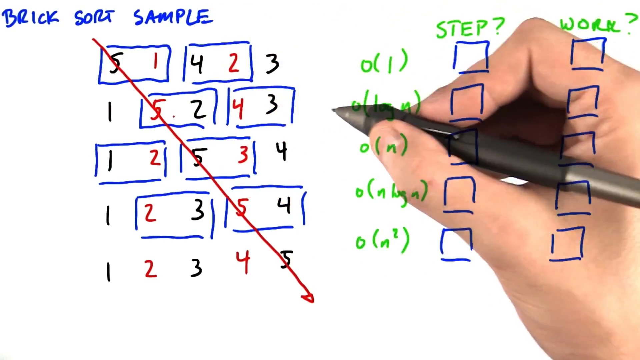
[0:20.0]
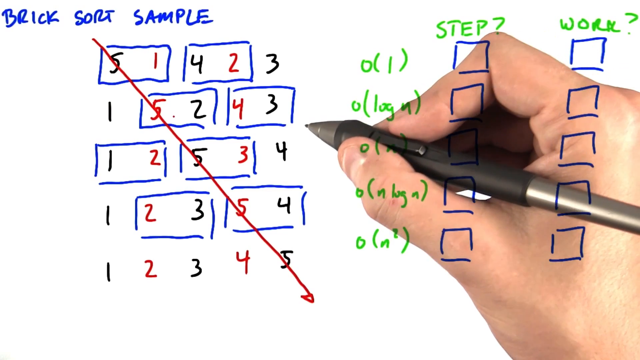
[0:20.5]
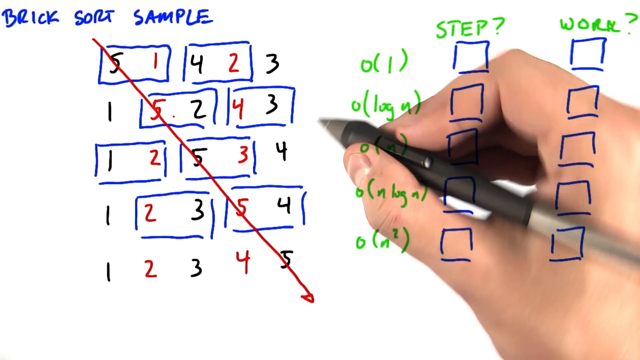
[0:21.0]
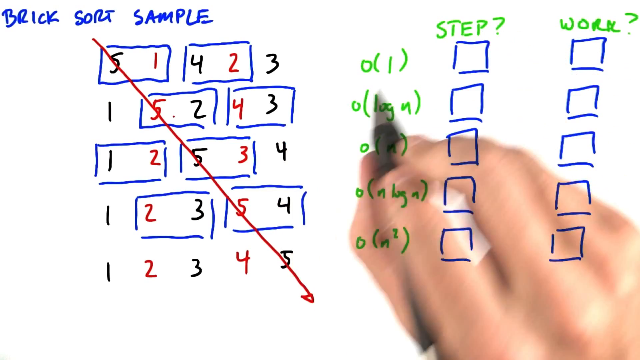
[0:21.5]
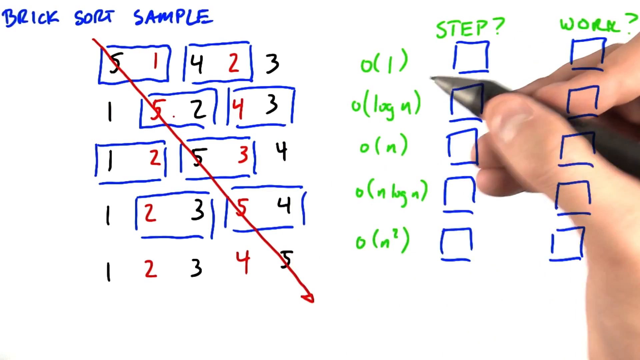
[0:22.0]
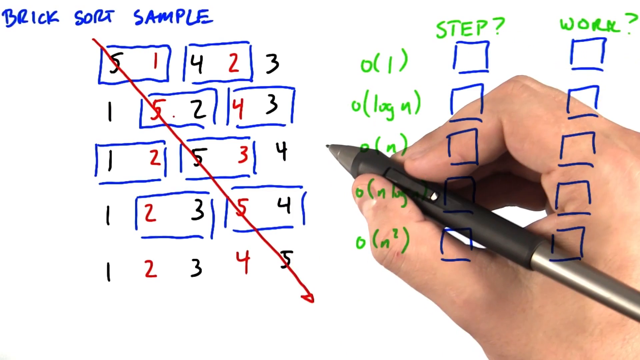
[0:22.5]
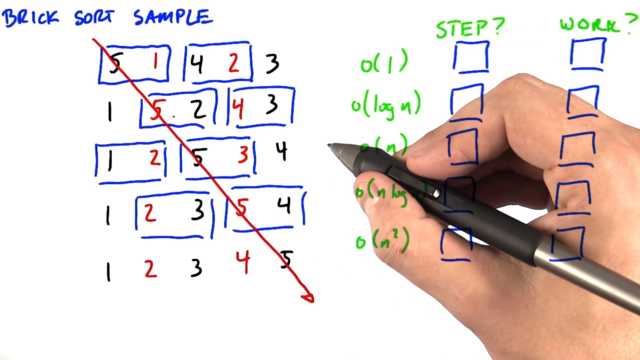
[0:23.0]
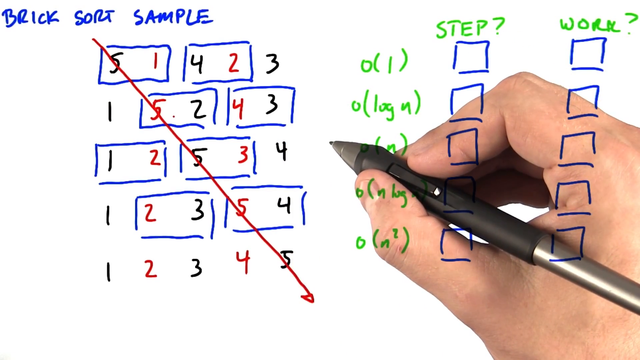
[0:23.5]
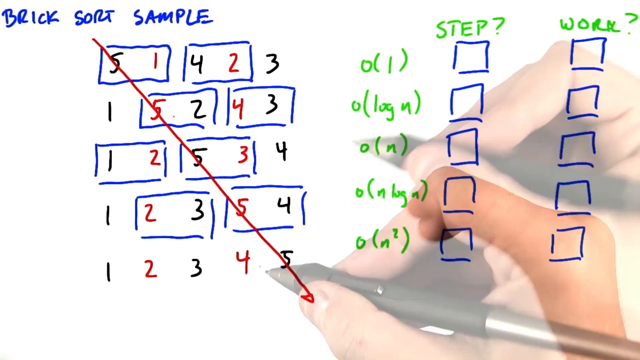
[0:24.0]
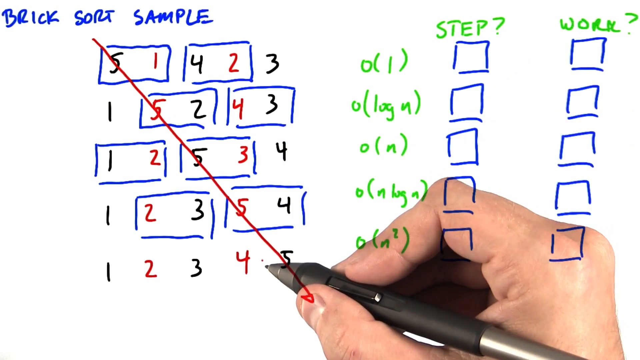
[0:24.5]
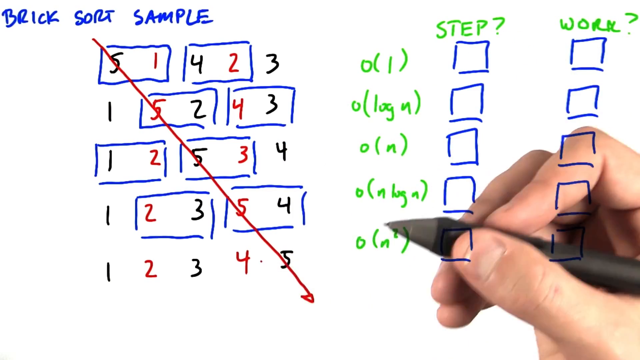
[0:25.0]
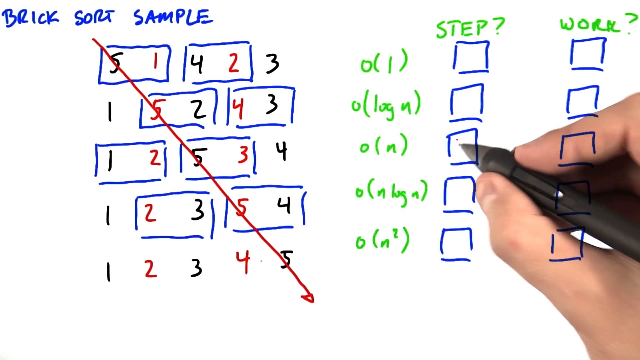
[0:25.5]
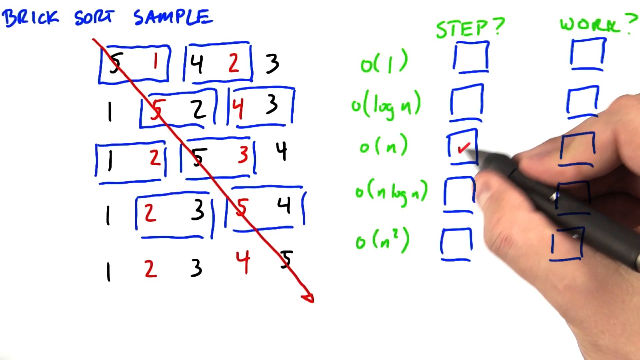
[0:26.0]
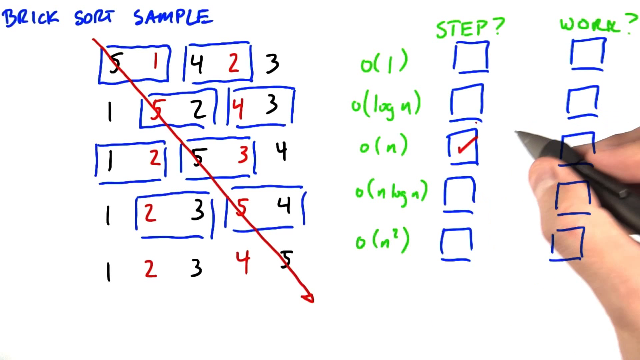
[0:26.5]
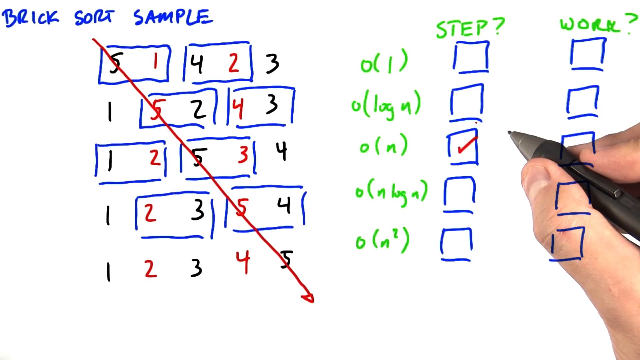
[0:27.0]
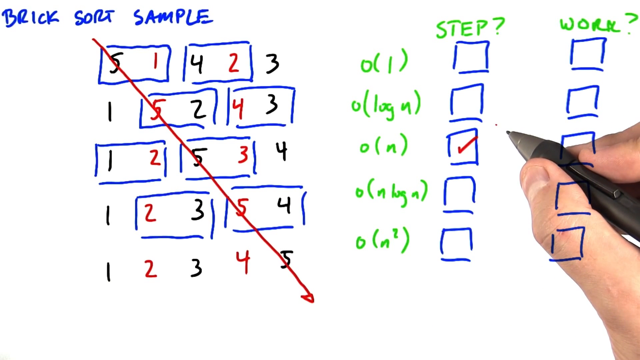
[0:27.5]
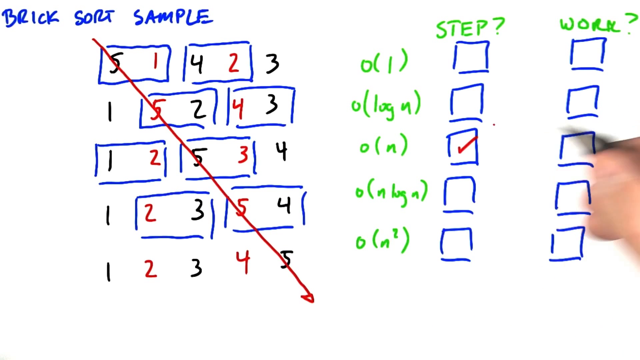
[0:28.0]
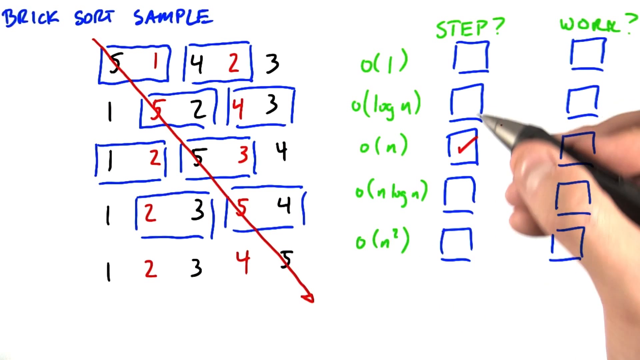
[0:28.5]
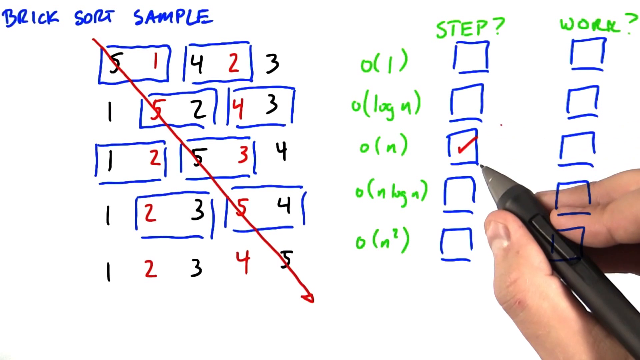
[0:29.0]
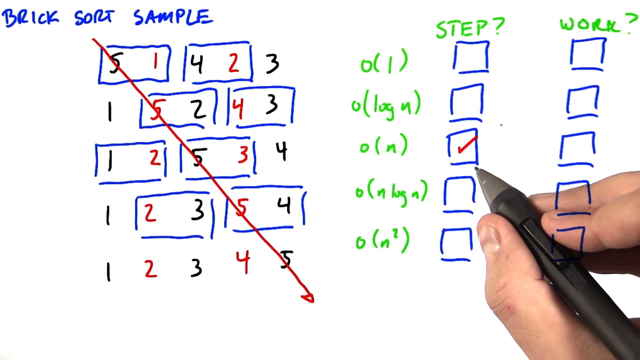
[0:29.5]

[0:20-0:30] The background is white, and at the top left it says "brick sort sample." Below that are the numbers with rectangles around them, with the red line going roughly diagonally down through them. On the right side are 10 squares in two rows, one on the right and one on the left. A hand, kind of behind all of the drawings, holds a black pen. It hovers and puts down little dots, then draws a red checkmark on the right side of the screen, in the first row down on the third square, under the "step?" area. The person then places some dots around that area as well.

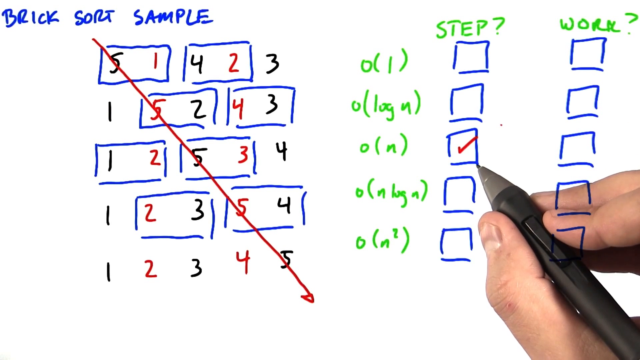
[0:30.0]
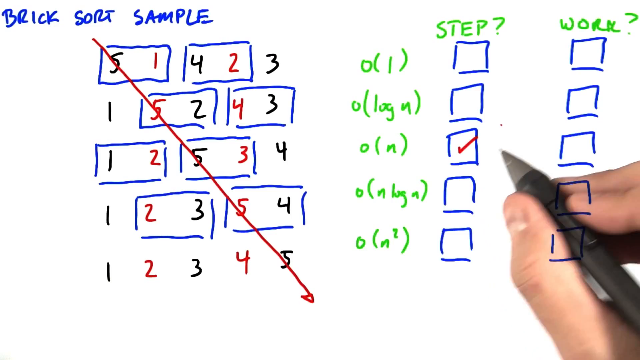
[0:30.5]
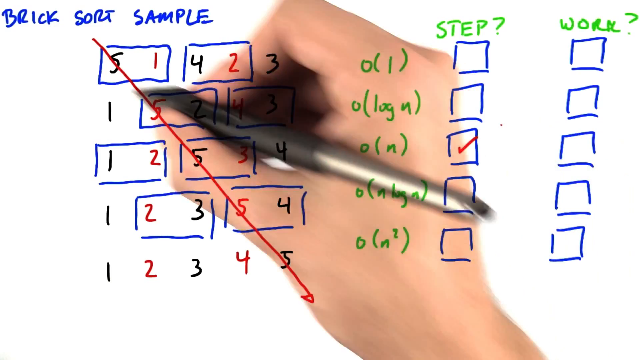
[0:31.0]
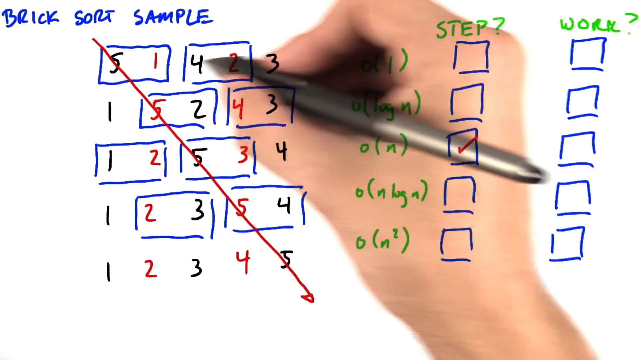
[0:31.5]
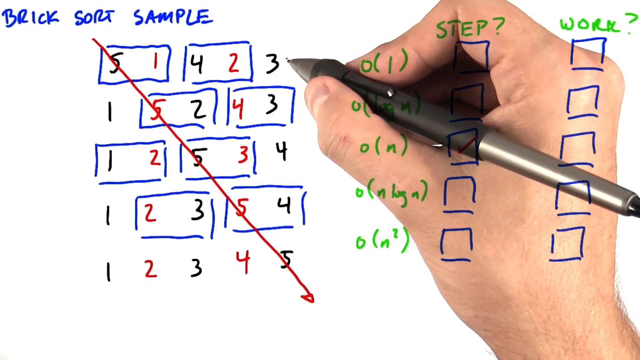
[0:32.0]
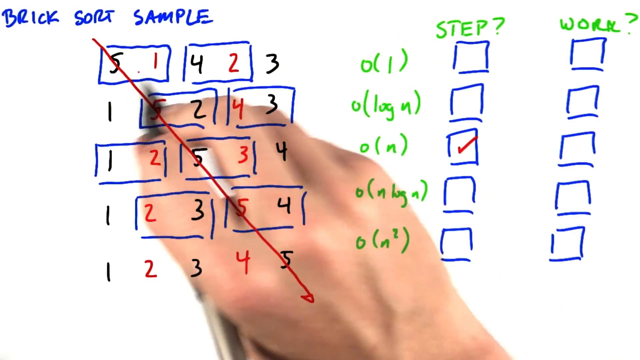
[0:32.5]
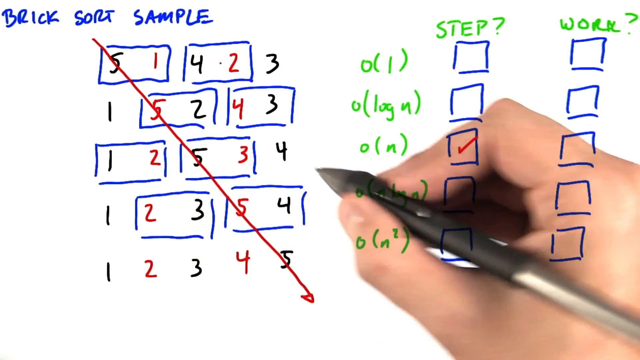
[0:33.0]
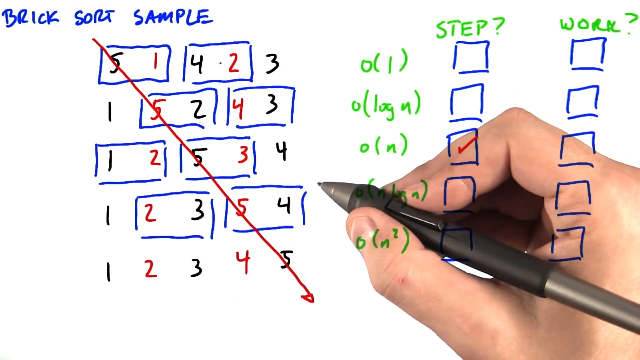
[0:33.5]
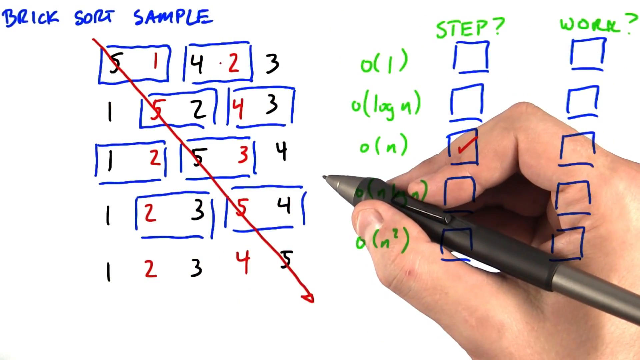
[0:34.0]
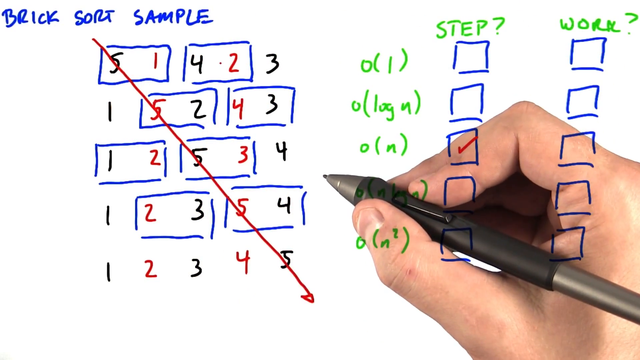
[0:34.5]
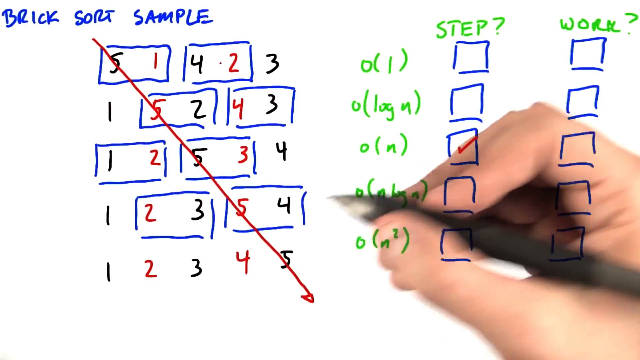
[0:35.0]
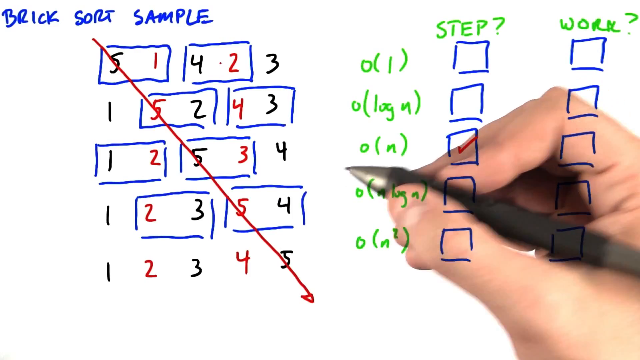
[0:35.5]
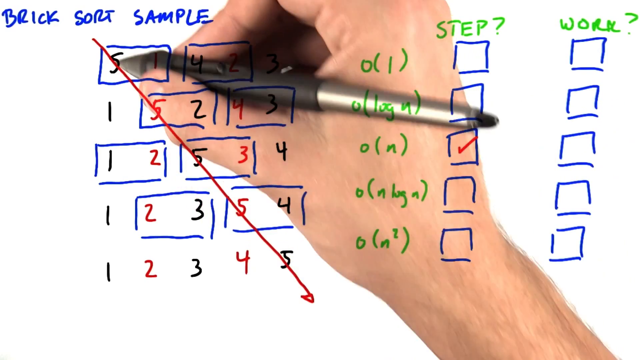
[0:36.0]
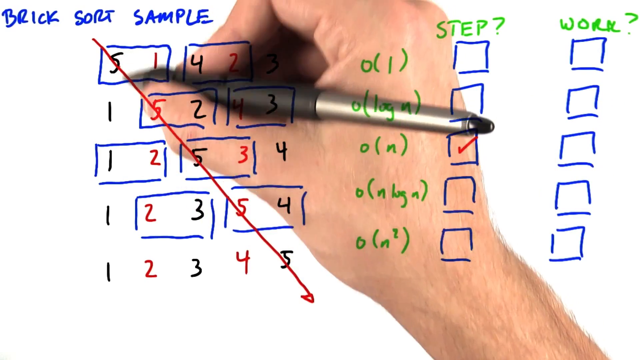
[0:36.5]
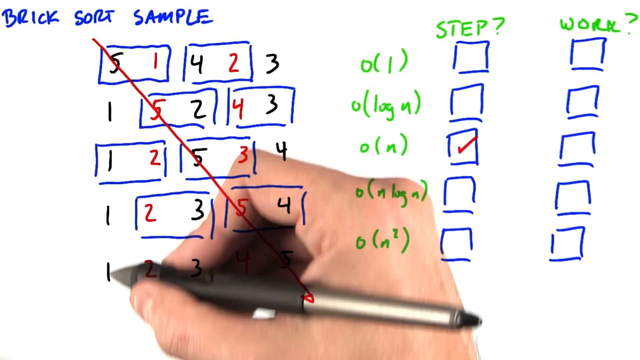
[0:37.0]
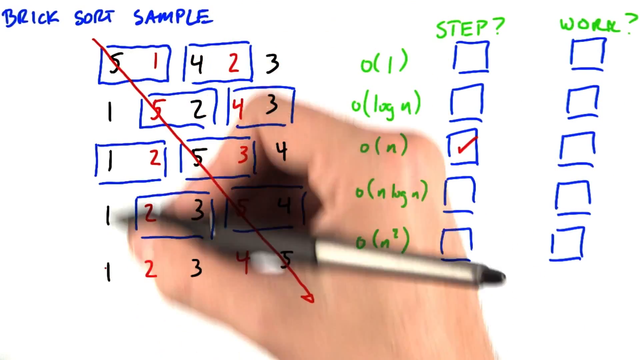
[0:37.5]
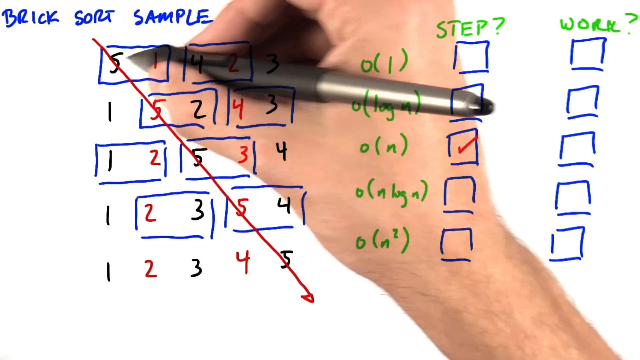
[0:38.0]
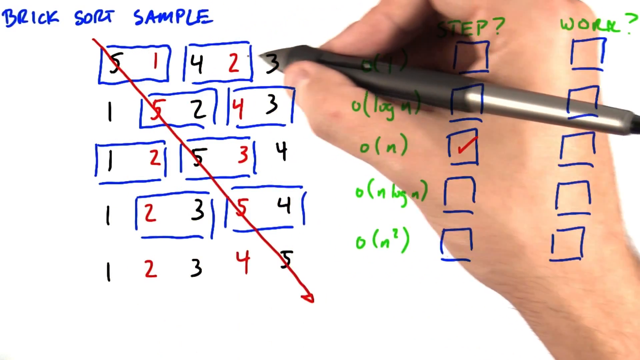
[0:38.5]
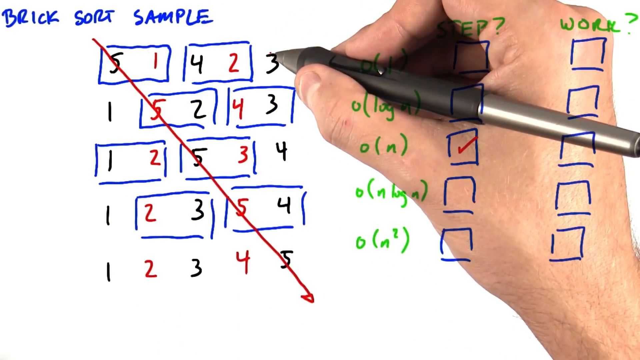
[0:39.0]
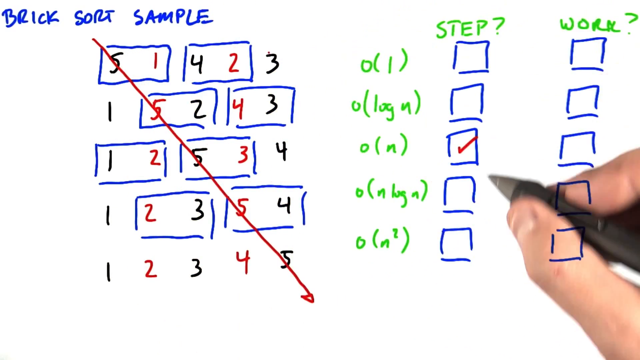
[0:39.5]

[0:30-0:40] The scene stays the same, with a white background and "brick sort sample" at the top left. Below that are blue rectangles surrounding pairs of numbers, which span five rows down and five wide. On the right side are 10 blue boxes in two rows of five boxes going down. The first box says "step?" and the other, on the right, says "work?". A white-skinned hand at the bottom right holds a black pen, hovering over the area of the third box in the first row. The person makes some movements without actually writing anything, doing a sort of scratch-out over the top row of the brick sort sample. The hand then moves back to the spot where it originally rested. Next, it moves vertically and horizontally over the brick sort sample on the left, along the first row down and the first row across.